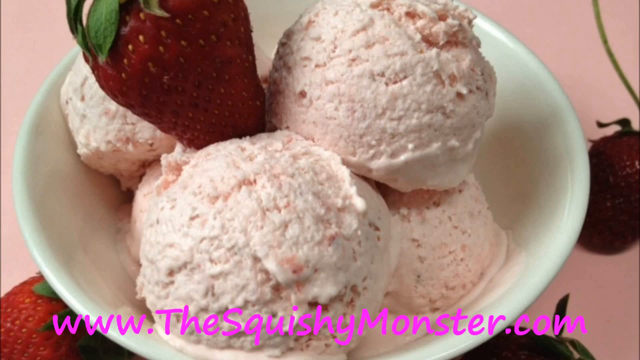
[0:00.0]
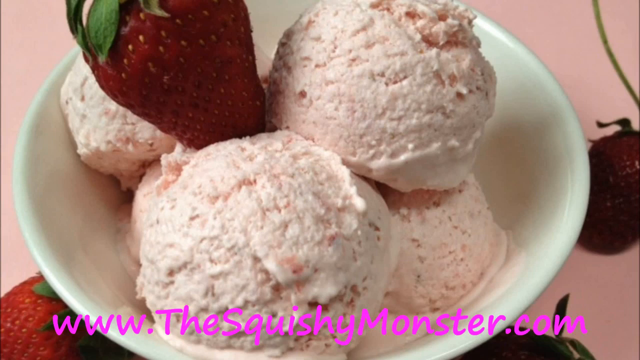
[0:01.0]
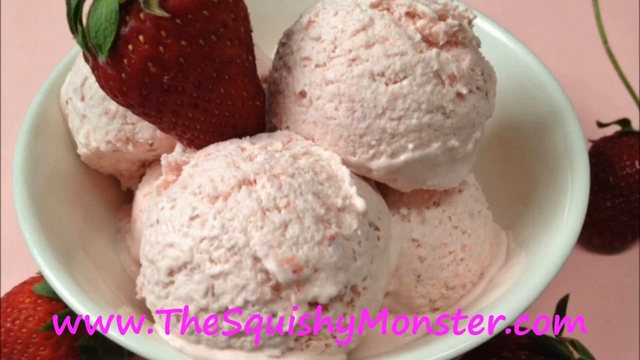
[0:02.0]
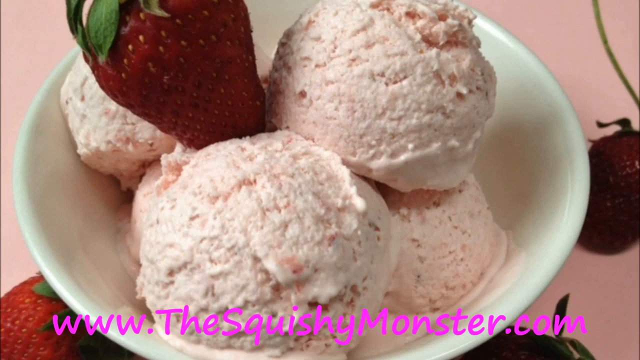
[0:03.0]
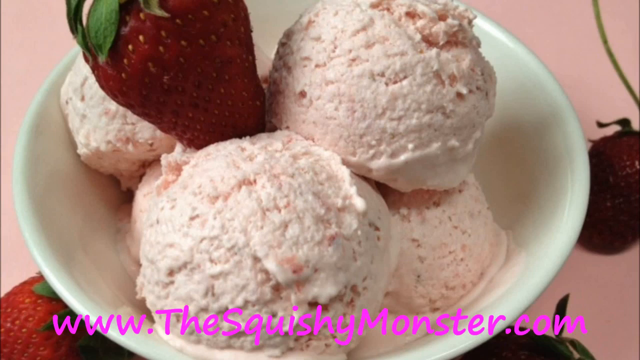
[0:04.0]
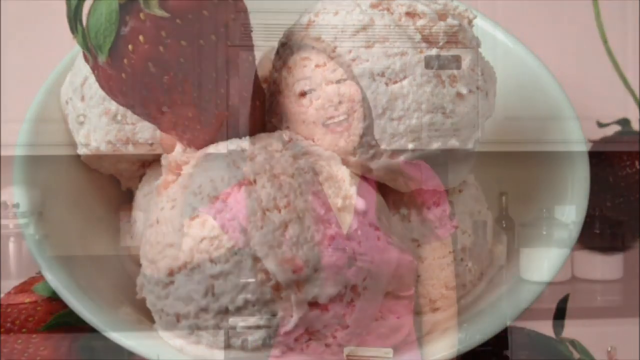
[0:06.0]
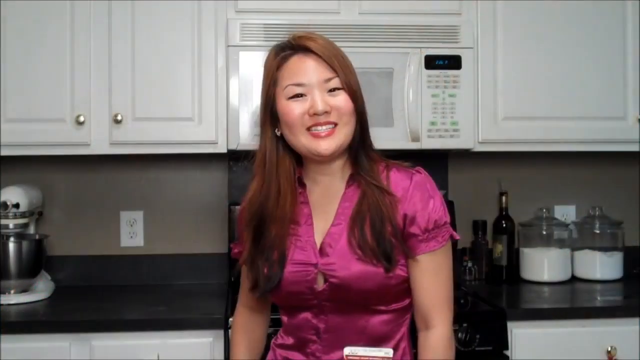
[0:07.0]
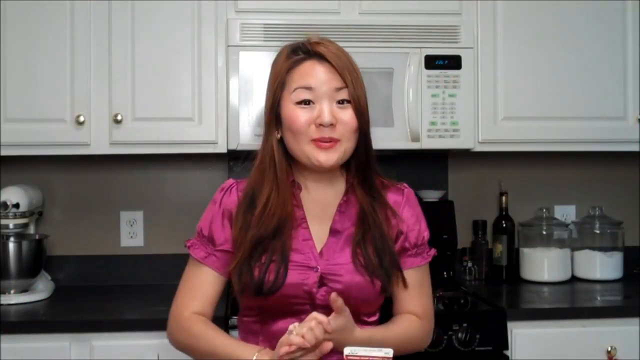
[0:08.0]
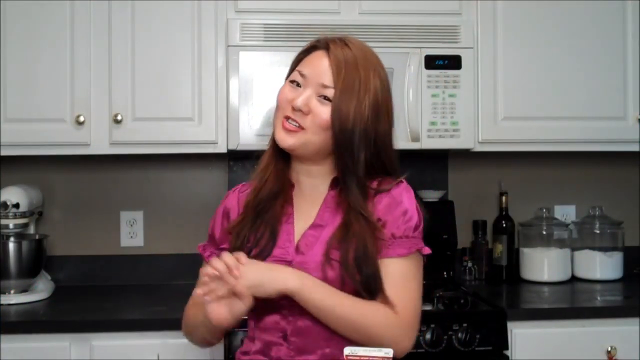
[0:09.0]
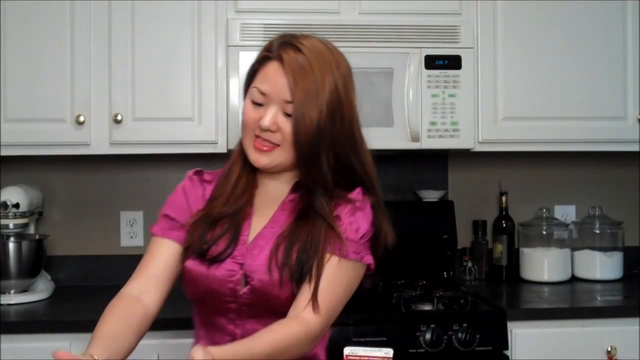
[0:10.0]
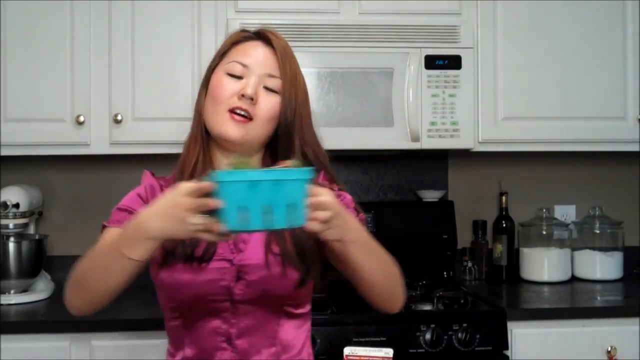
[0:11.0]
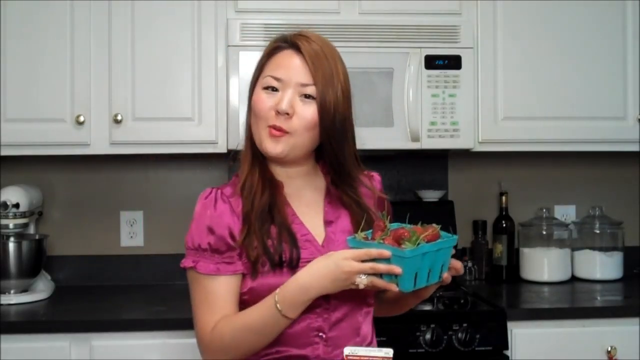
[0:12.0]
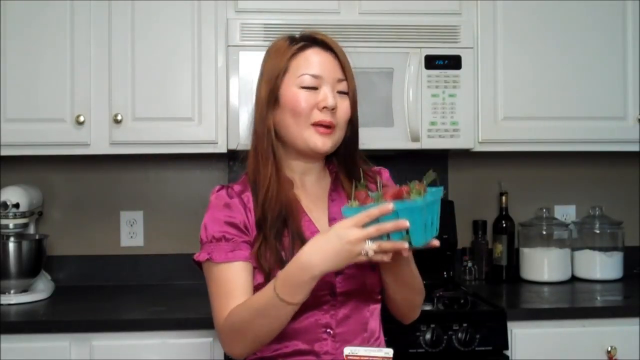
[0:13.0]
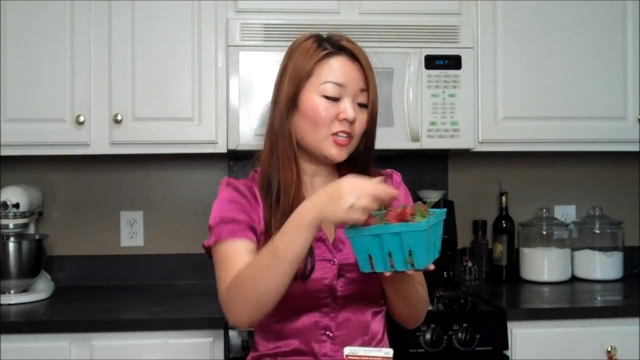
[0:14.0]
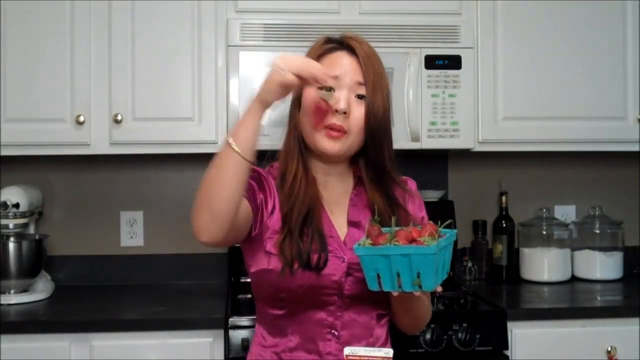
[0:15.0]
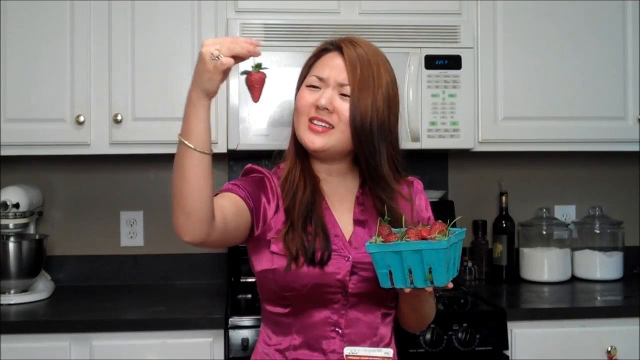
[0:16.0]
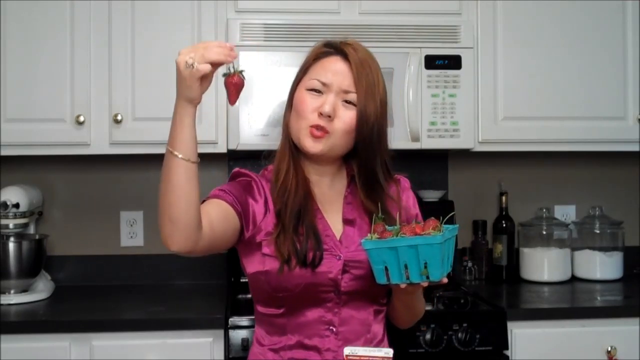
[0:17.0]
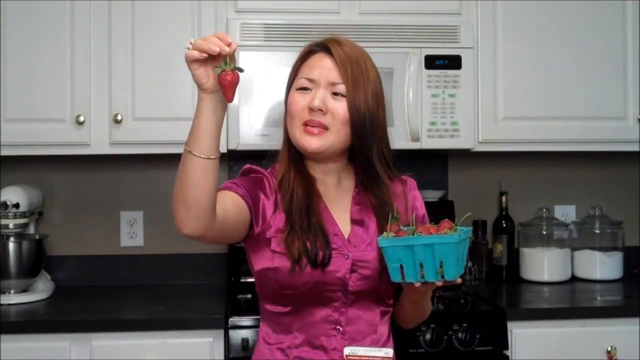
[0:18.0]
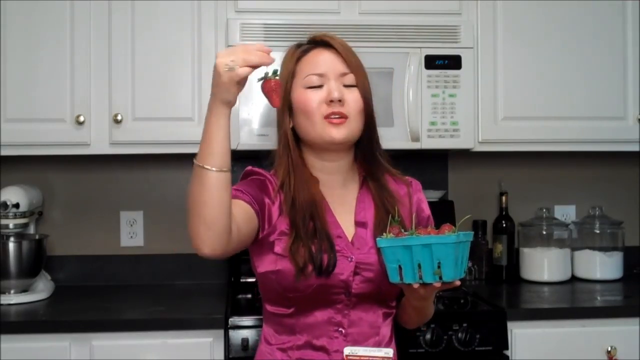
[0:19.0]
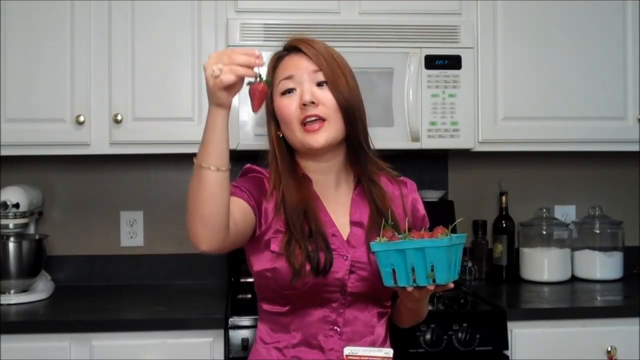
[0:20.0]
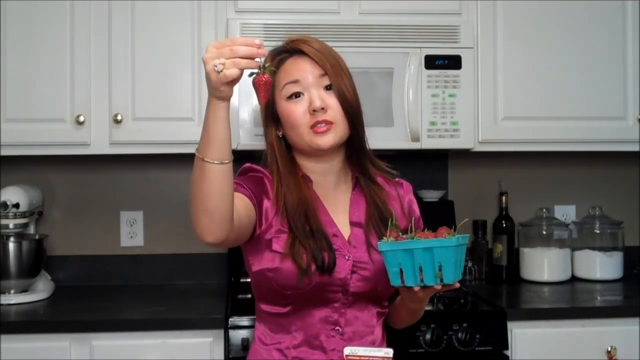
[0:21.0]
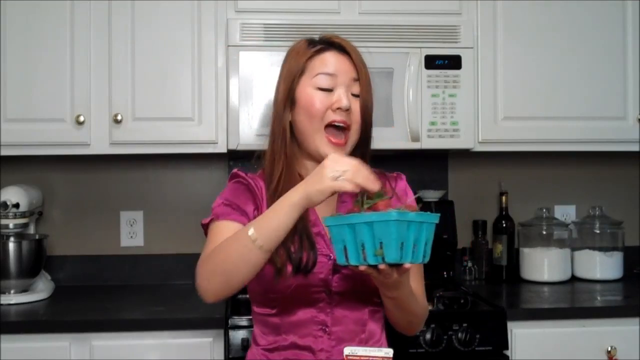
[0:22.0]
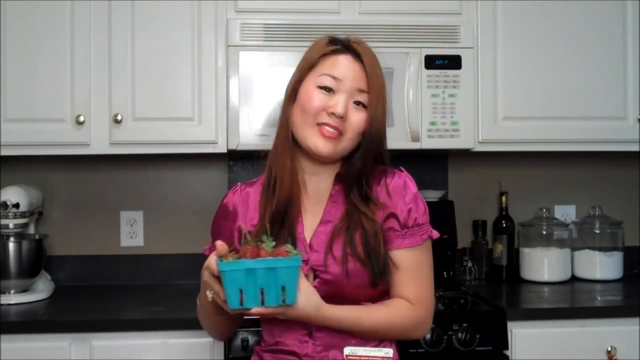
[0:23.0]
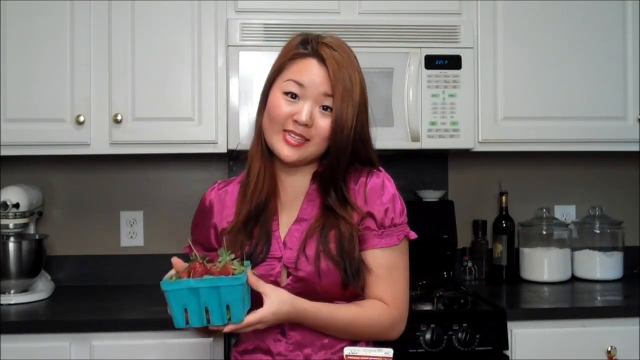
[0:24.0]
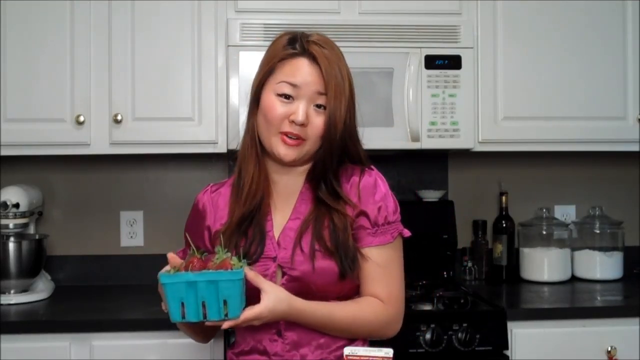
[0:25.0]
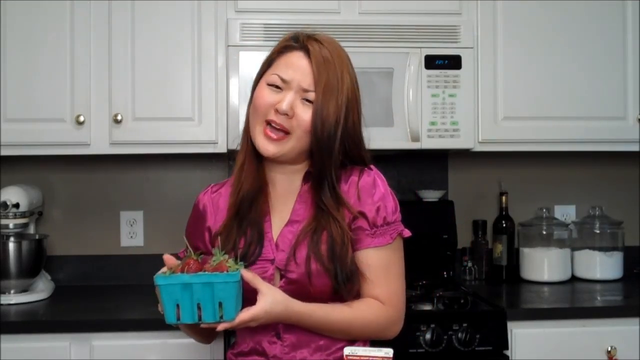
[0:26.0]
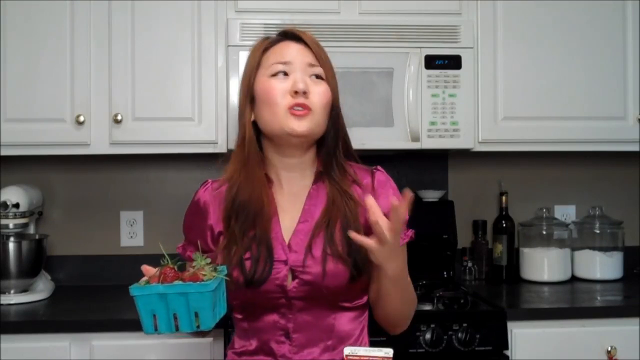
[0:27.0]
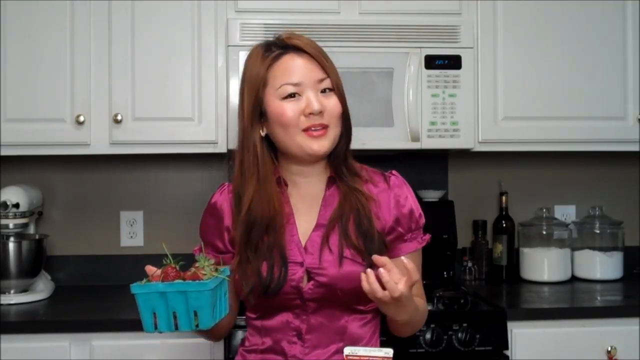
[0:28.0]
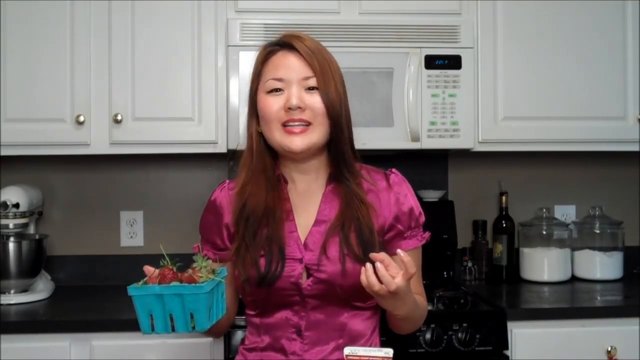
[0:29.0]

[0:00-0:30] A woman in her kitchen begins to prepare strawberry ice cream. The video opens with a close-up photograph of a bowl filled with scoops of pink ice cream, with a strawberry resting in the bowl. At the bottom of the screen, text reads "www.TheSquishyMonster.com". The scene changes to the woman standing in her kitchen. She is in fuchsia, and the cabinets and appliance behind her are white, except for a stovetop, which is black. A white standing mixer is on the left, and on the right are some containers filled with white powder, like flour or sugar. She picks up a blue pint carton of strawberries and picks up one of the strawberries with her right hand. She dangles it by the stem, looks at it, and then speaks to the camera. She places it back in the container and continues holding the container and speaking to the camera.